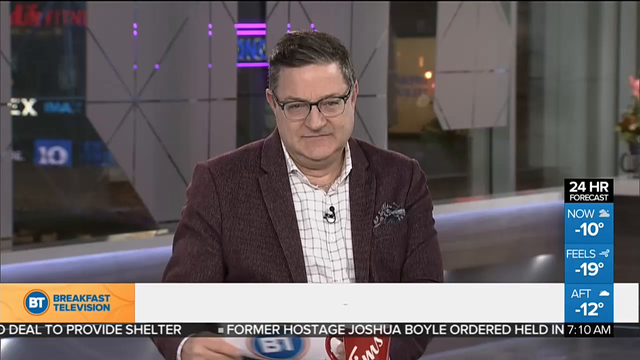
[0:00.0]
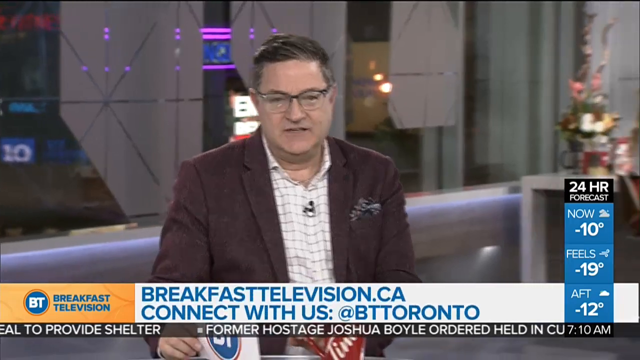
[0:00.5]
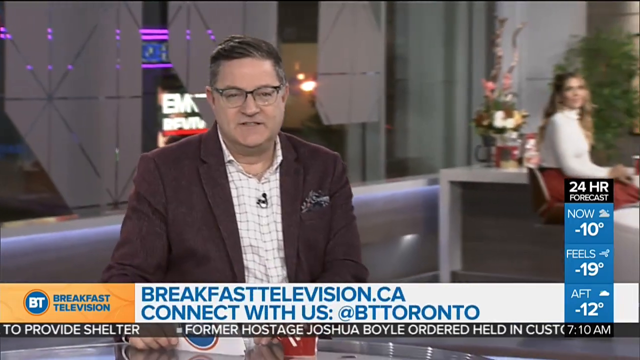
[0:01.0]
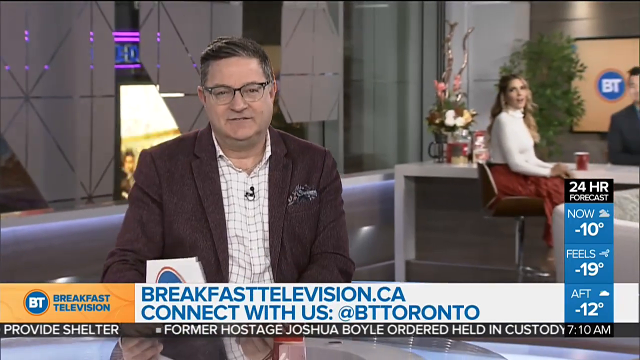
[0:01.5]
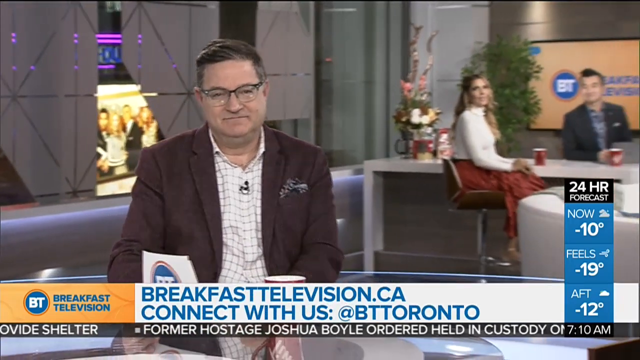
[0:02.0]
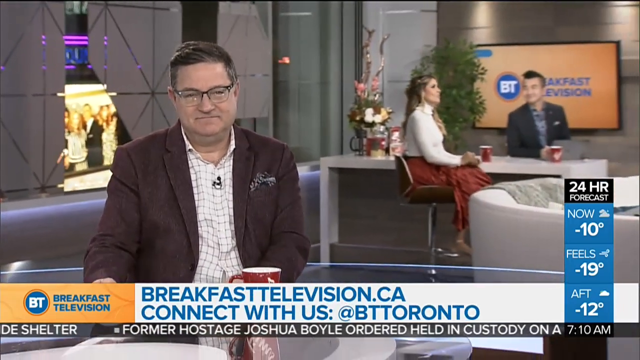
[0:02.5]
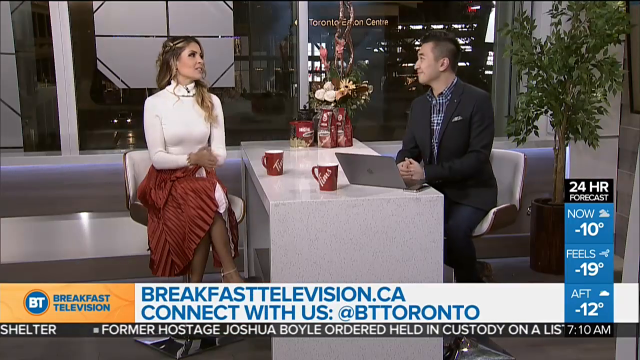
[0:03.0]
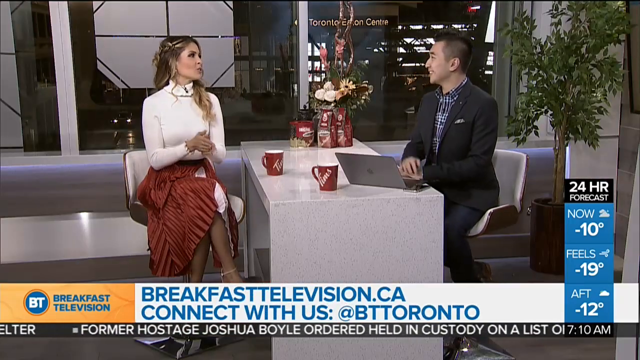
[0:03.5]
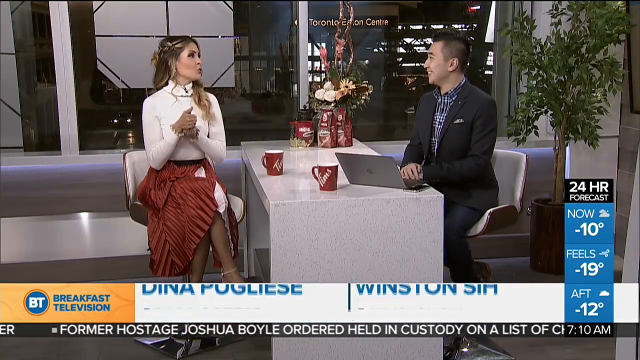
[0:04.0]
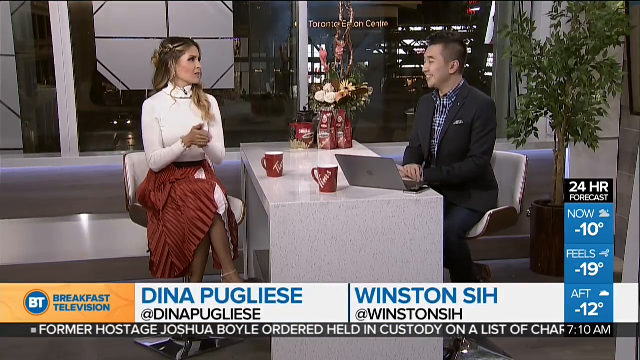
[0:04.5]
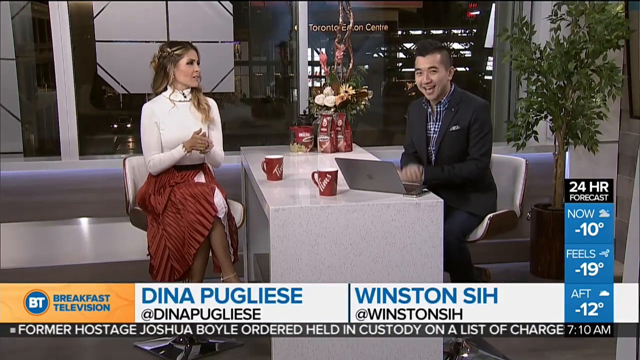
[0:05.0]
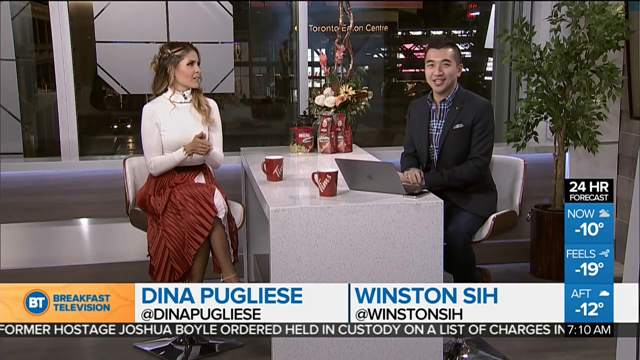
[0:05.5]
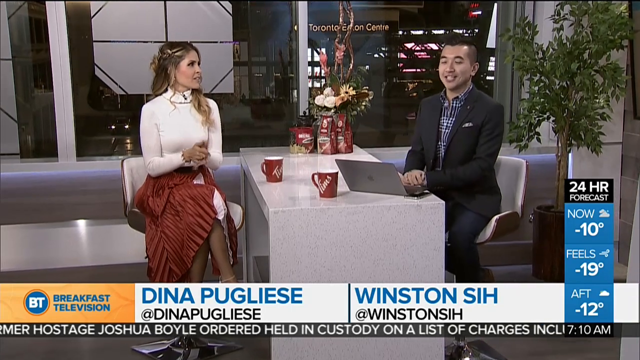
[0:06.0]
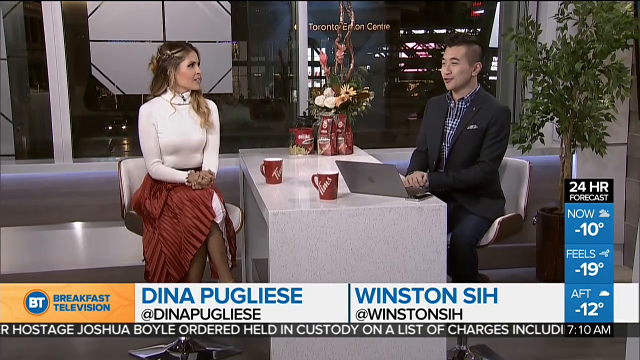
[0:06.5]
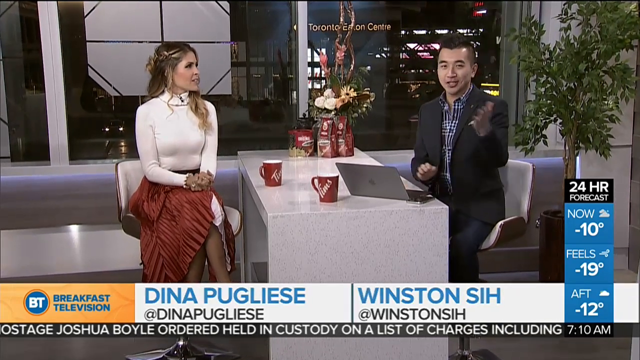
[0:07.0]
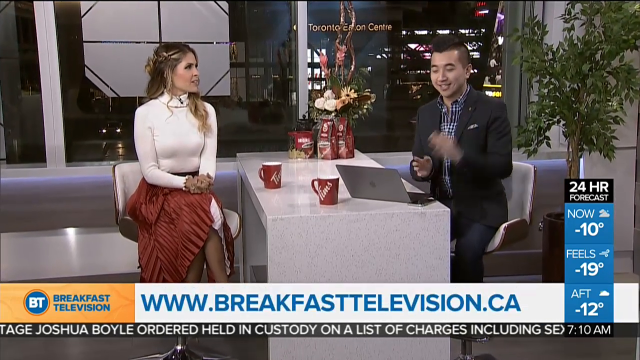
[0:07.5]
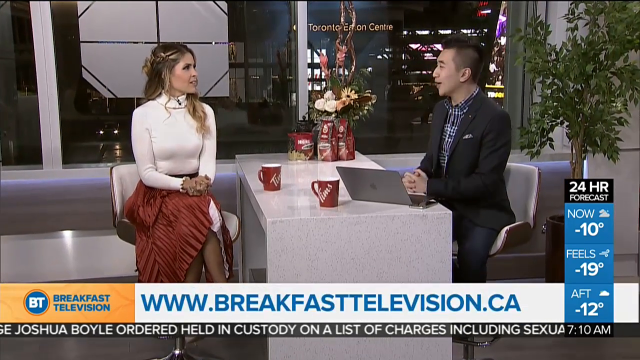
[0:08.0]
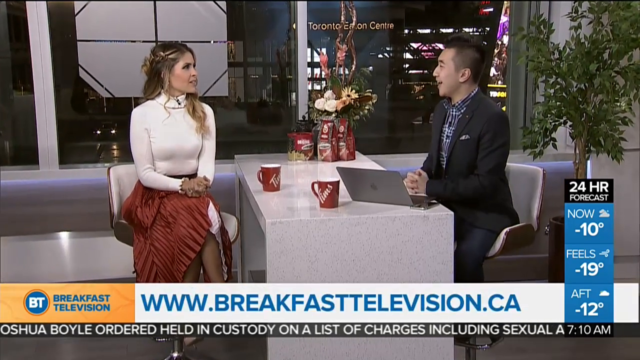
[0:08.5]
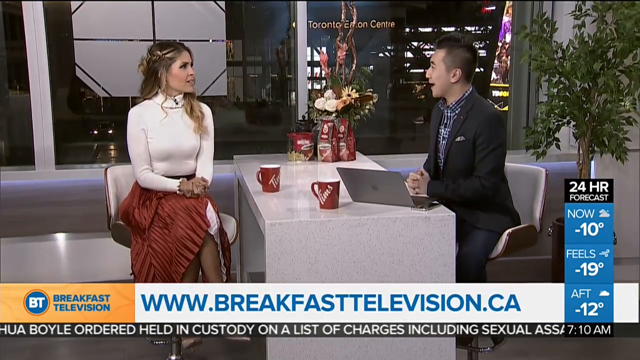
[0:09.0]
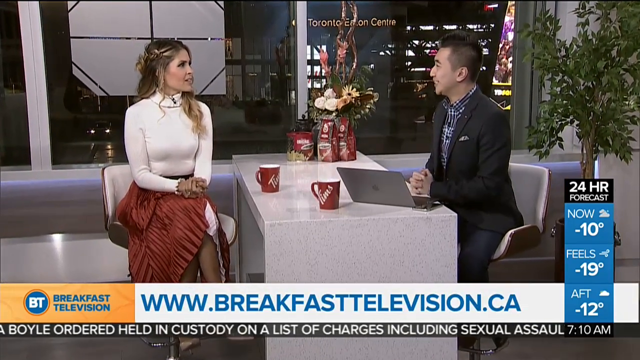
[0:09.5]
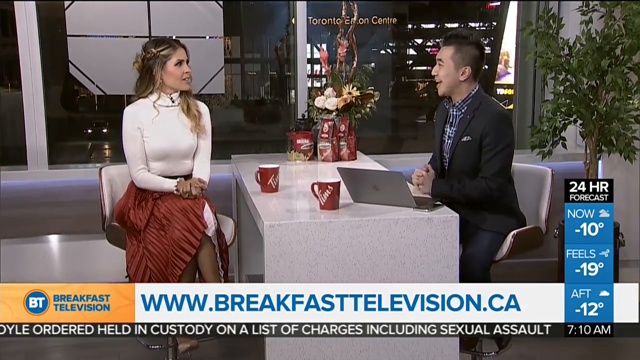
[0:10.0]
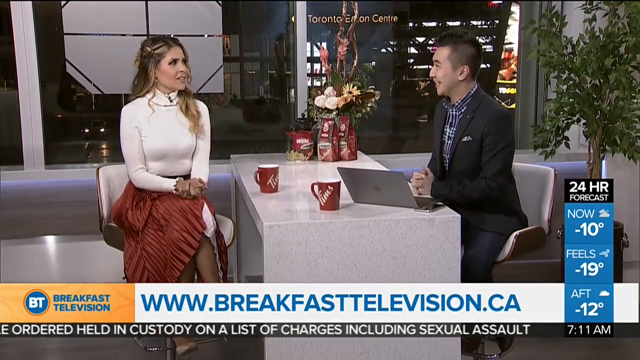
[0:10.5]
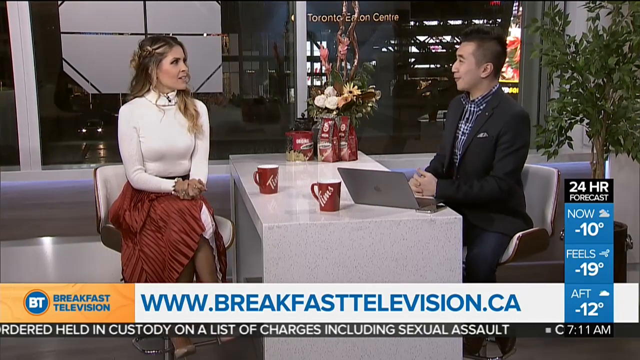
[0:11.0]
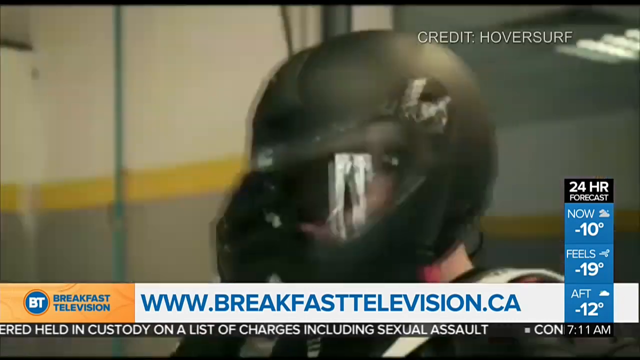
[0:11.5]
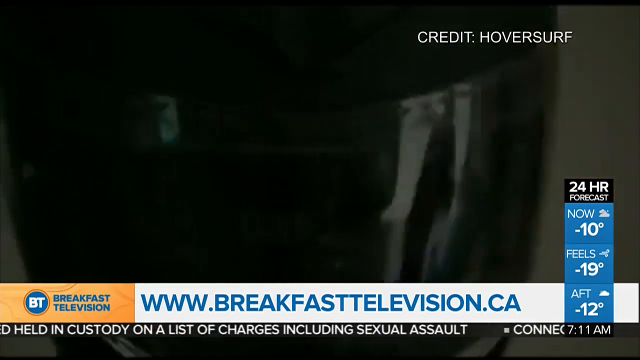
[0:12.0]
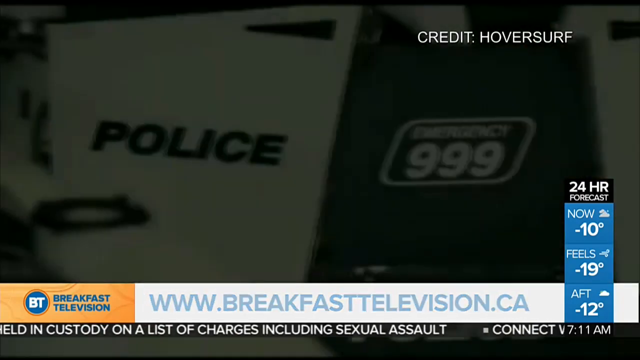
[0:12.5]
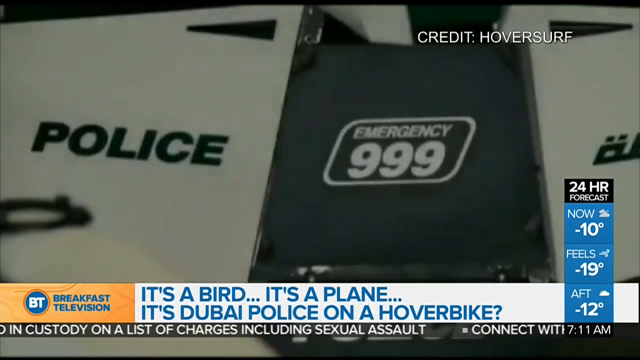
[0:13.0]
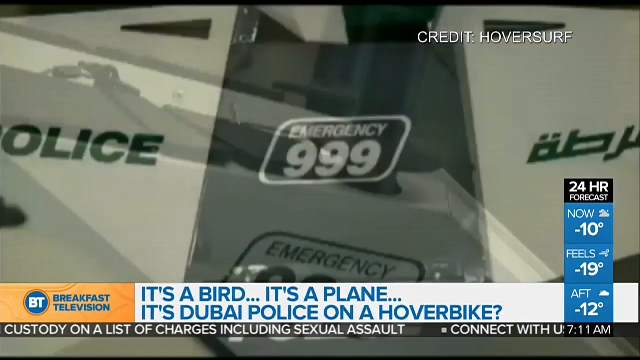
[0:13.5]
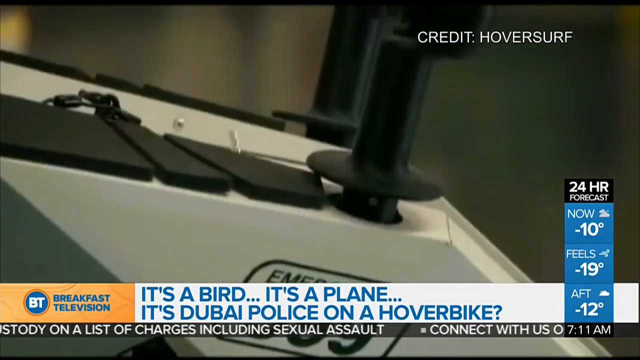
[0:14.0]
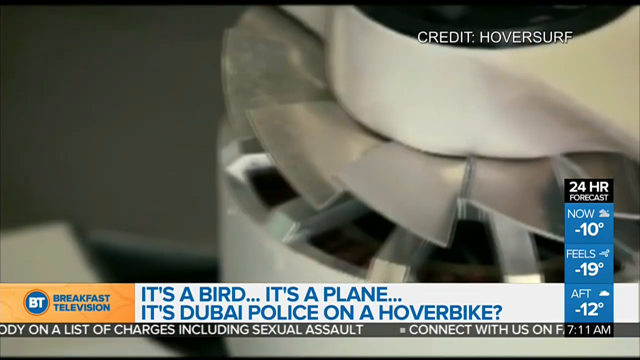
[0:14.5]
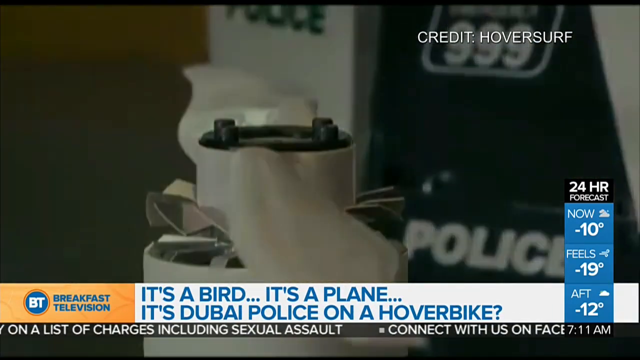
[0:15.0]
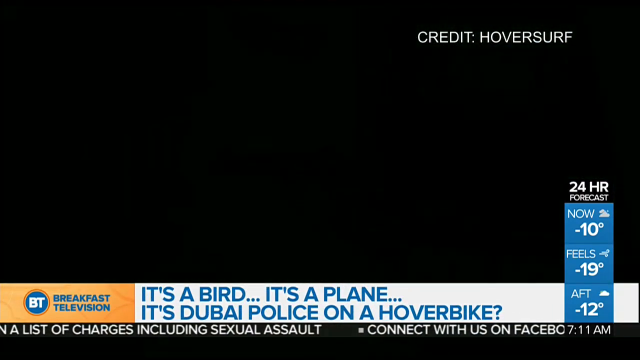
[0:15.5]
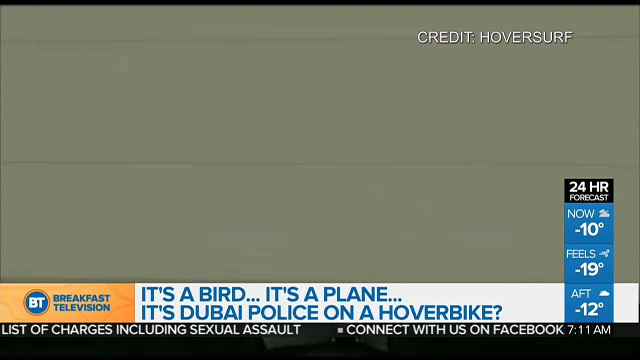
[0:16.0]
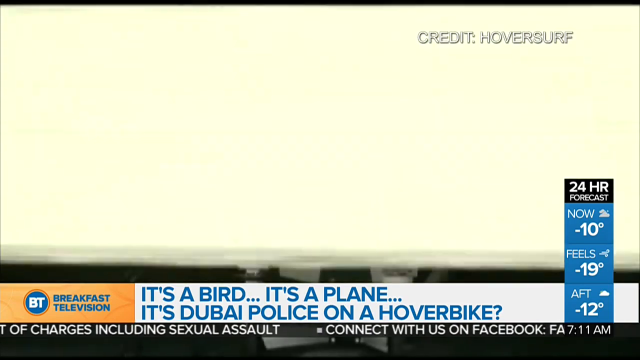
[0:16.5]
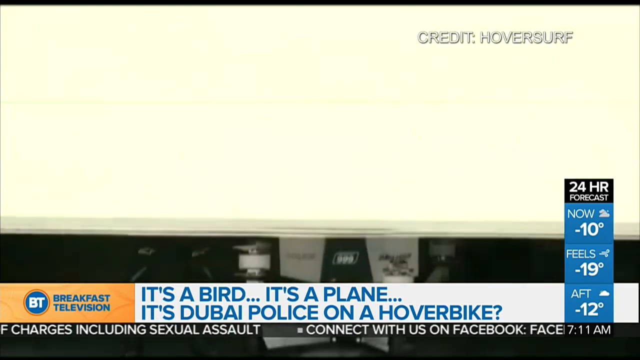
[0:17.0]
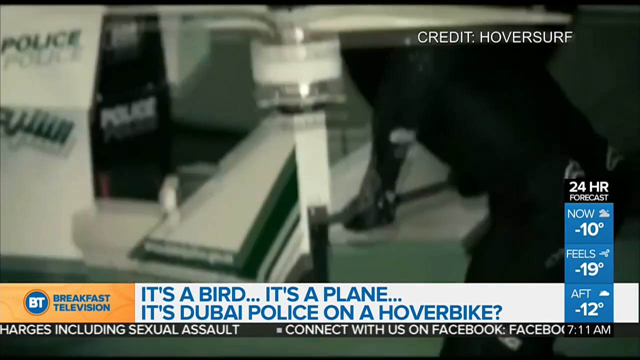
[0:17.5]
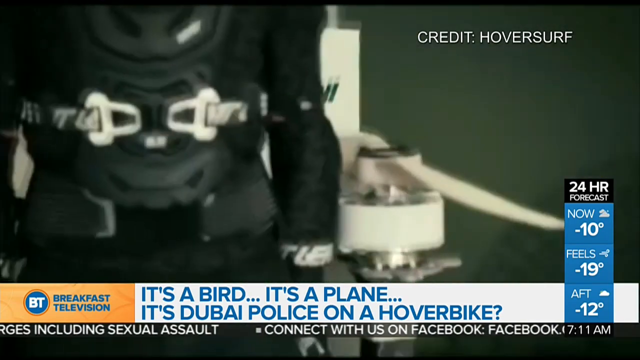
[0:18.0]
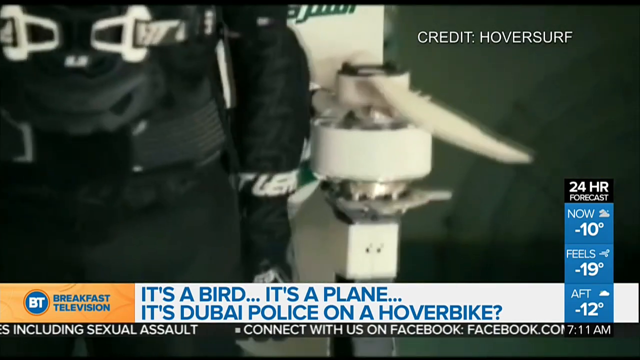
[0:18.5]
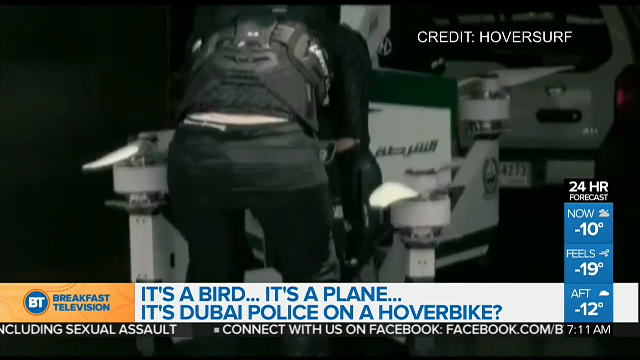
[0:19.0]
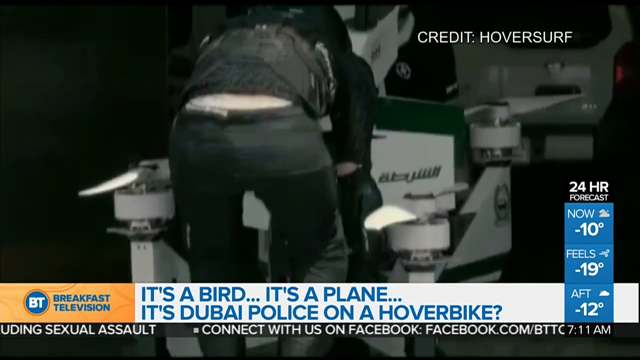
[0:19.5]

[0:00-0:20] A news anchor is at the center of the screen. "Breakfast Television" appears at the bottom of the screen, along with two lines of text: "breakfasttelevision.ca" and, below it, "connect with us @bttoronto". The camera then turns to two people at the back, seemingly one news anchor and one interviewee. The woman wears a white top and a brown or red skirt, and the man wears a black suit with a checked shirt inside. Between the two is a white table with two mugs on top, one for the interviewee and one for the interviewer. Text at the bottom of the screen shows their Twitter handles: the woman is Dina Pugliese, "@dinapugliese", and the man is Winston Sih, "@winstonsih". The two seem to be talking about an issue. Then a drone-like instrument pops up on screen, carried by two men who both wear black.